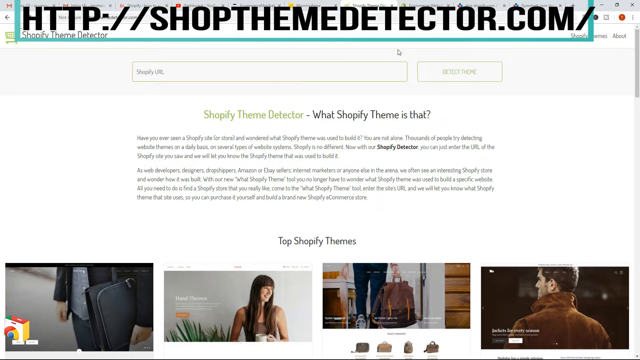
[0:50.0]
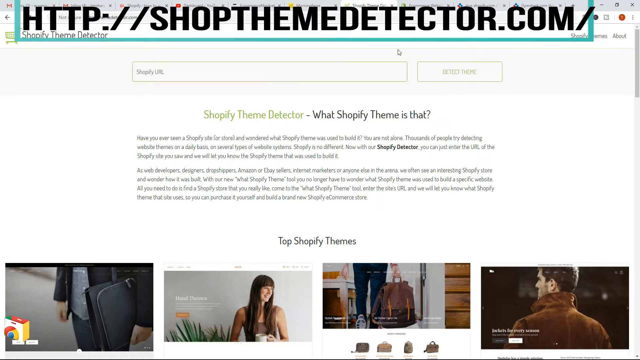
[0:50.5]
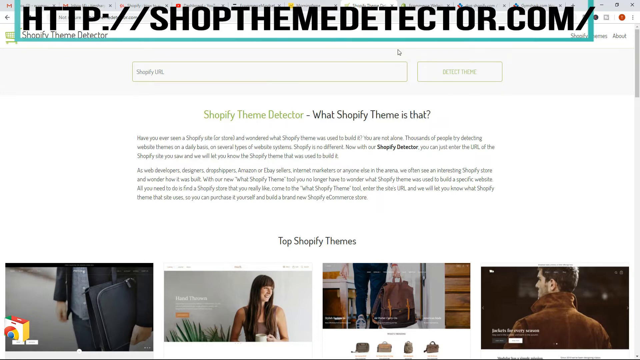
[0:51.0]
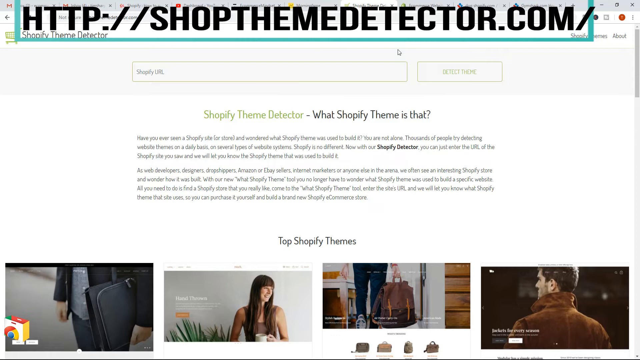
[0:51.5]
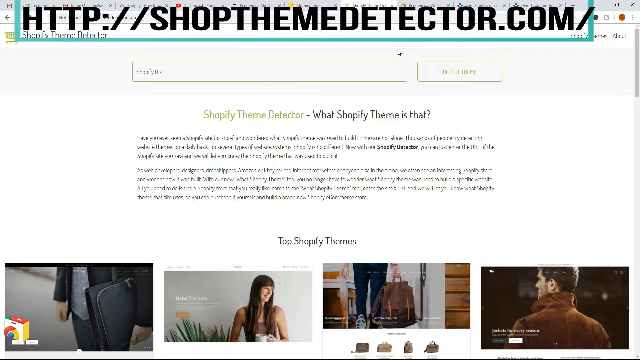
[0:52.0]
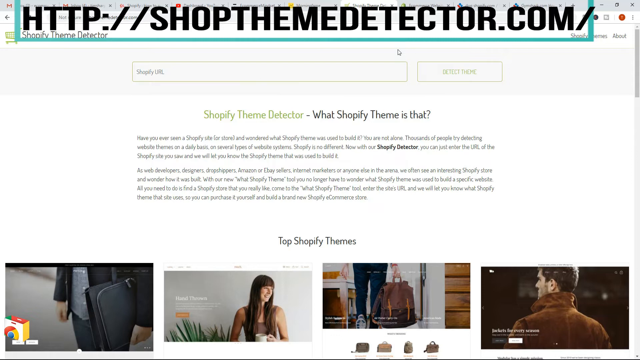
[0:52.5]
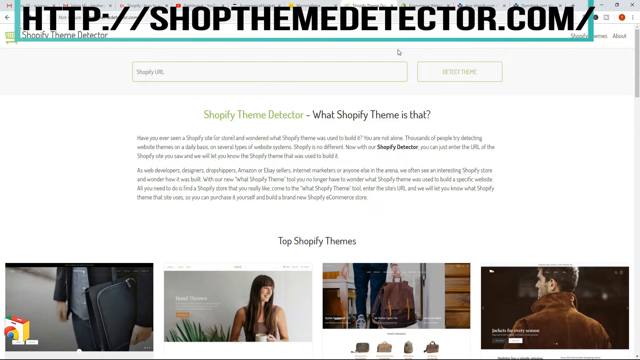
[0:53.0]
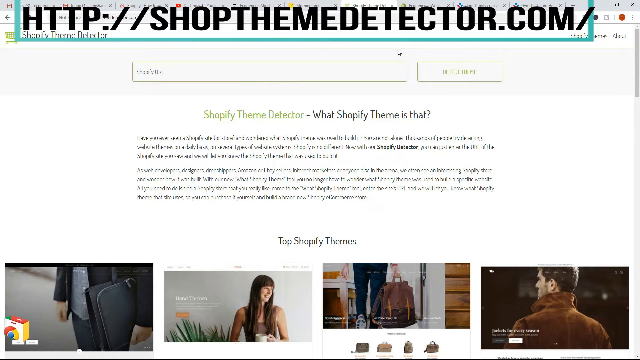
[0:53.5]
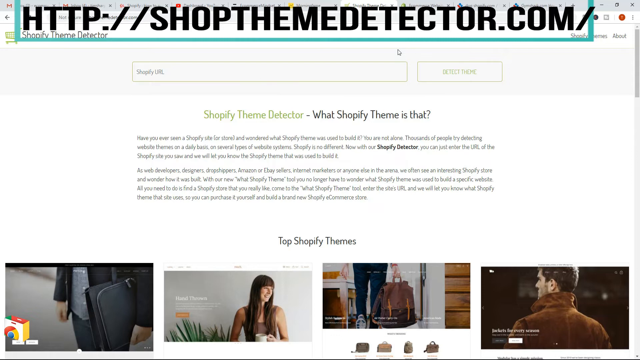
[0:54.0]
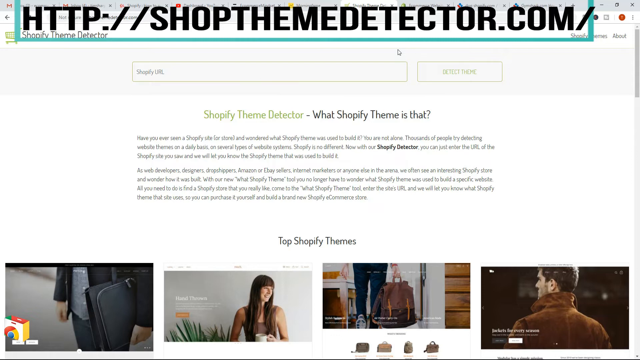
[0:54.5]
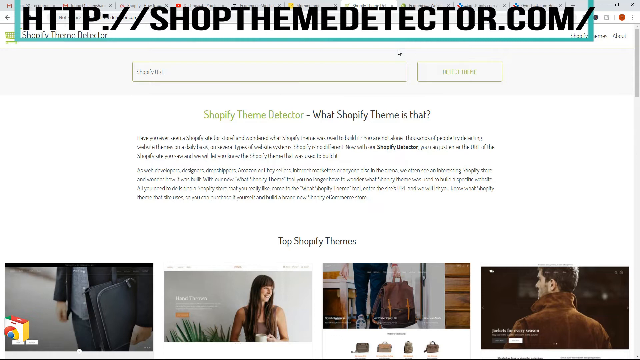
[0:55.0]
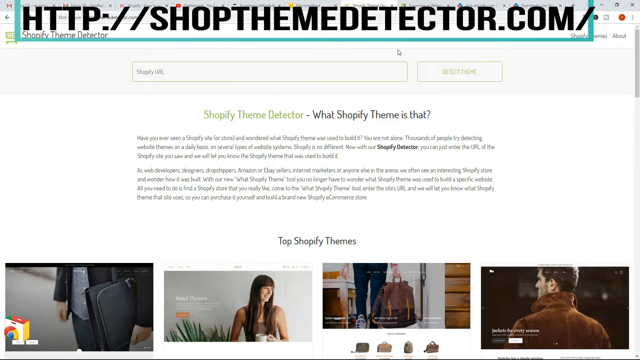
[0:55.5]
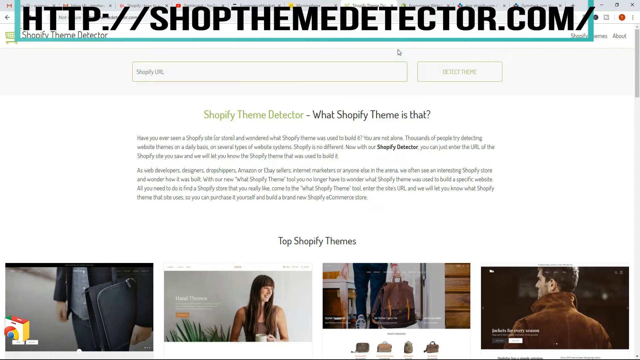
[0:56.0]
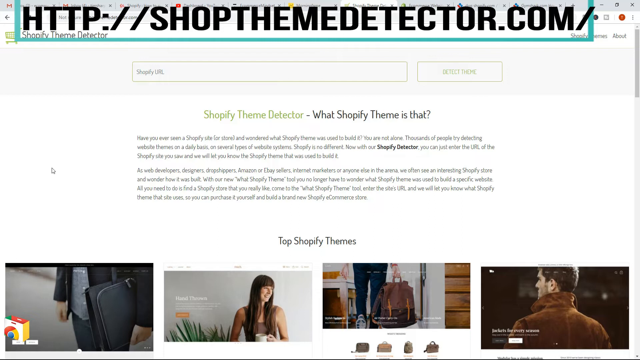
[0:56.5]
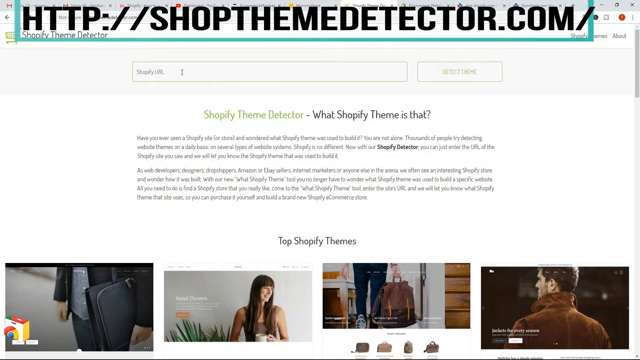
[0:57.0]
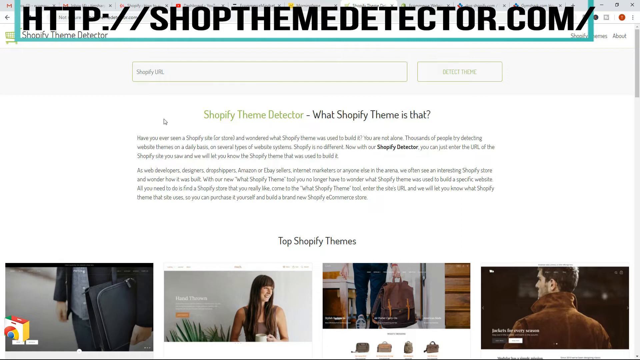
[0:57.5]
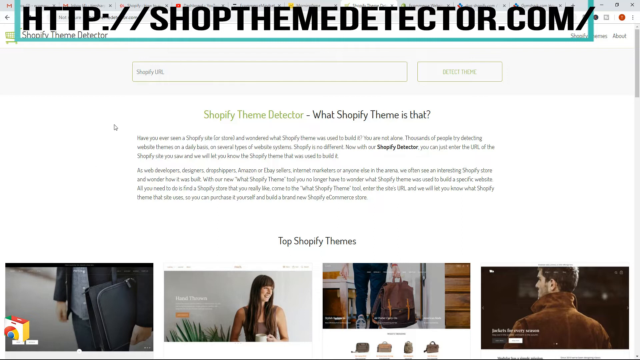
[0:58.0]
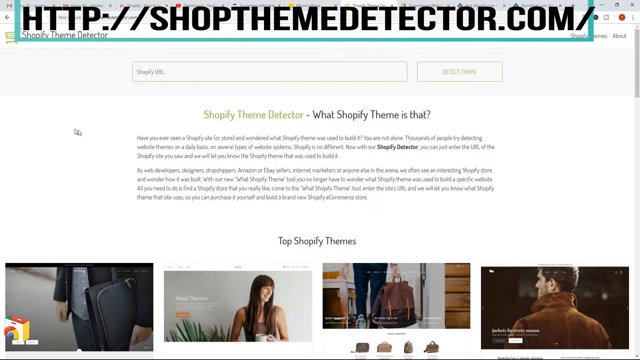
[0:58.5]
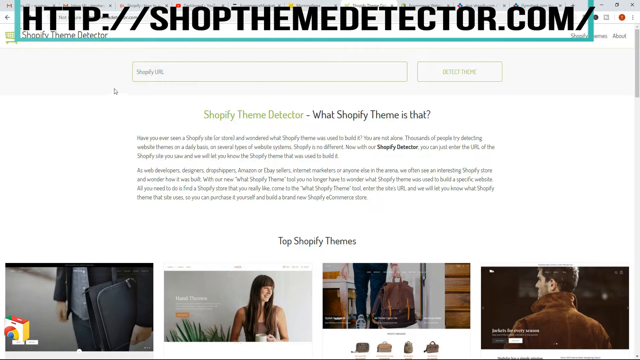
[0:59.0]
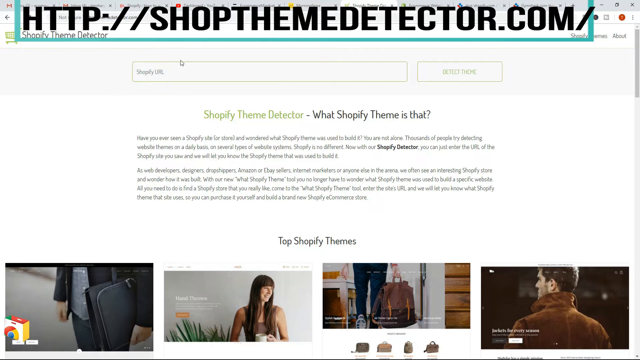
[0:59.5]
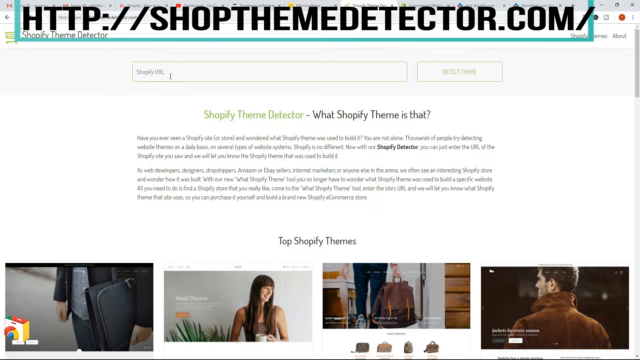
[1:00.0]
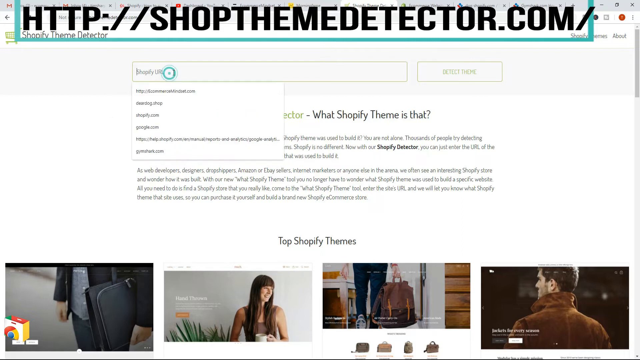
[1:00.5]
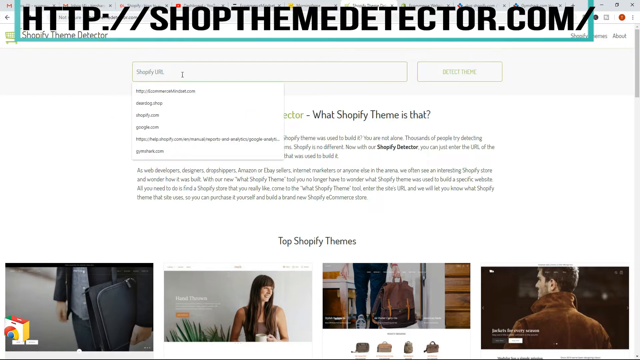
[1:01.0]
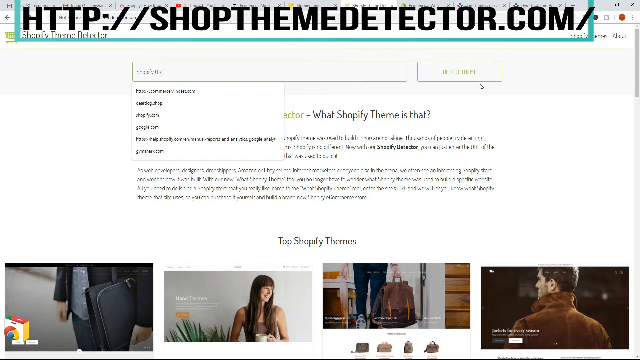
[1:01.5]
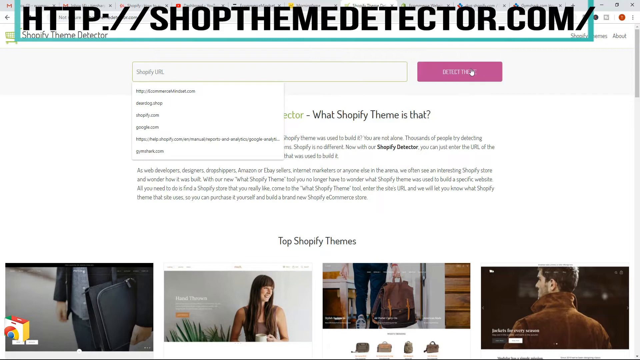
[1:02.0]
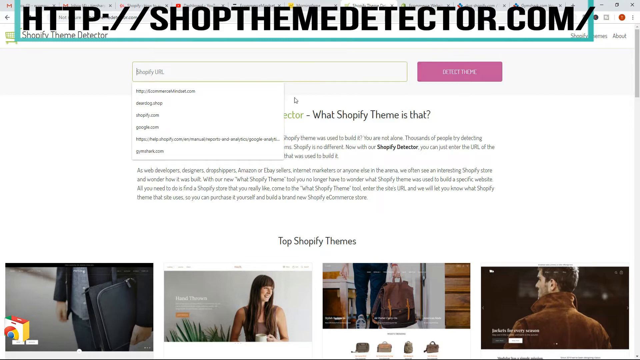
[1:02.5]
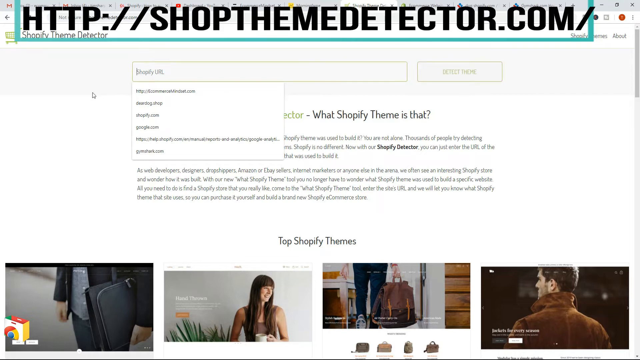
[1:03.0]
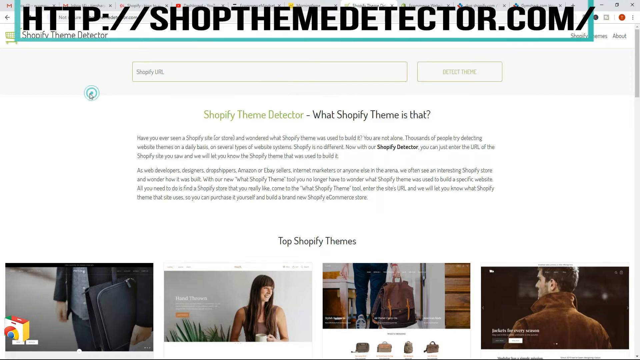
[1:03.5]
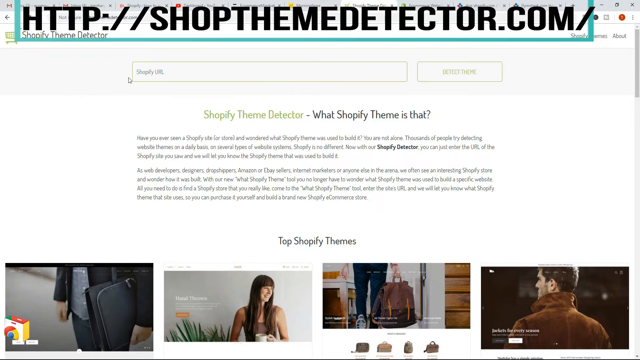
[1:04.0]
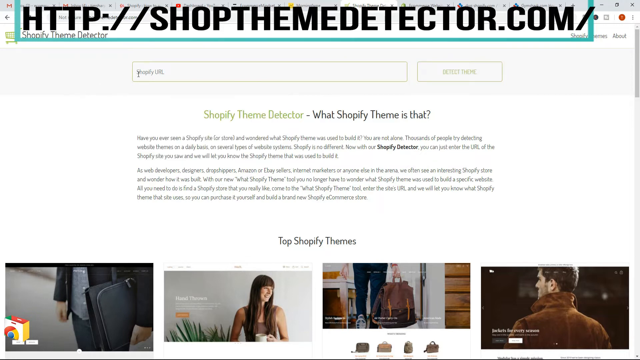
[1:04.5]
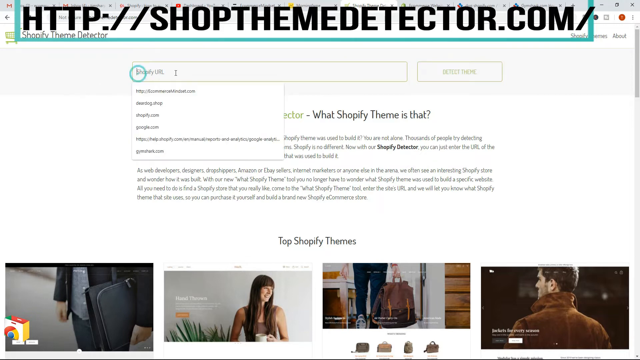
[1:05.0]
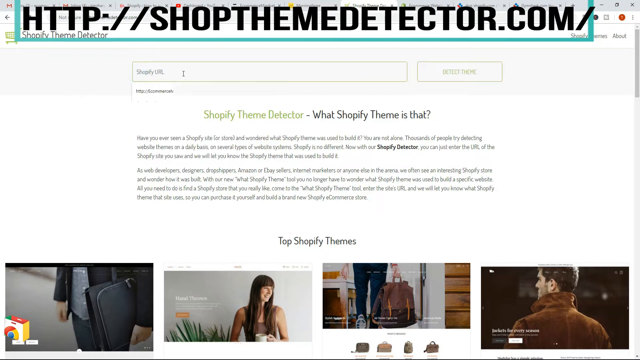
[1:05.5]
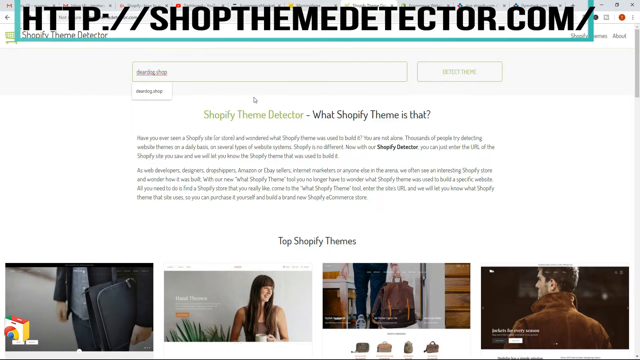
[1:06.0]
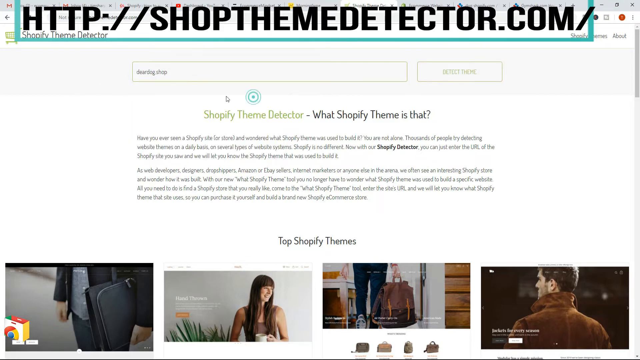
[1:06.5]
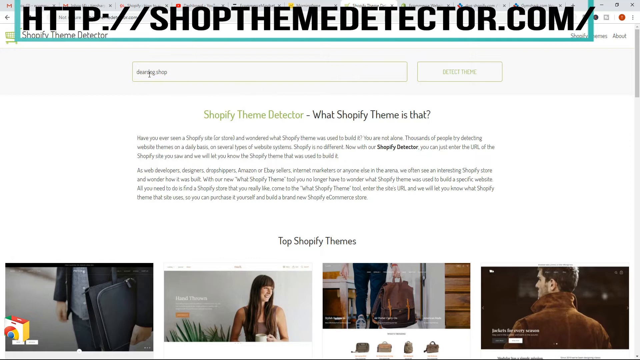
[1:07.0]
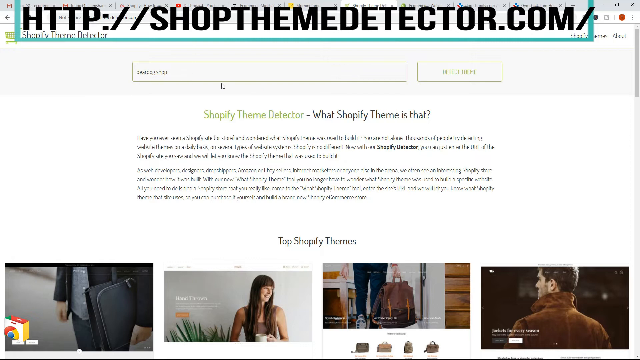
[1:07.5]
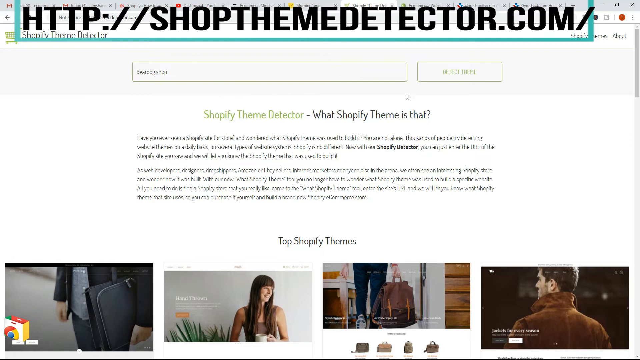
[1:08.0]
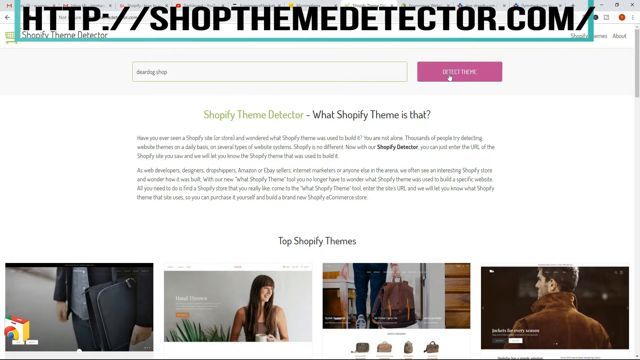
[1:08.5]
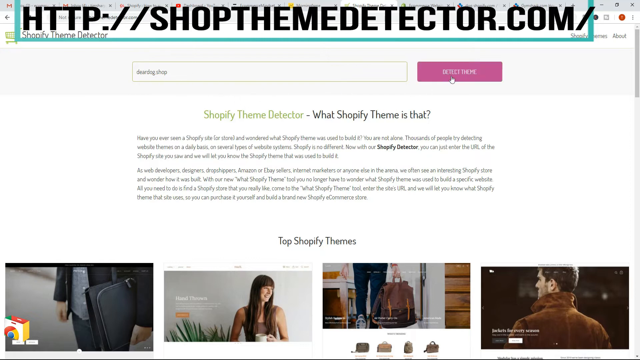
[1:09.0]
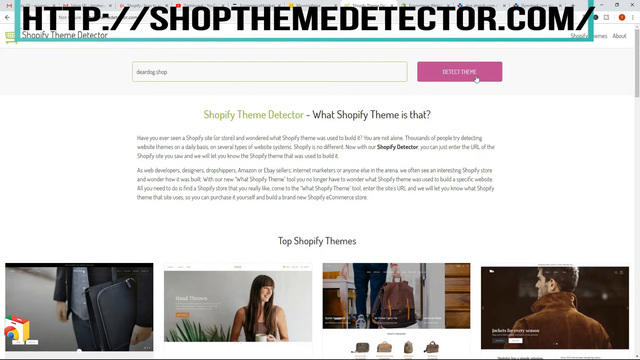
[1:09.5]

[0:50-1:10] The Shopify theme detector site, shopthemedetector.com, is shown. It has a field for typing in a theme and a detect theme button, and a theme that is not shown on the screen is being typed in.